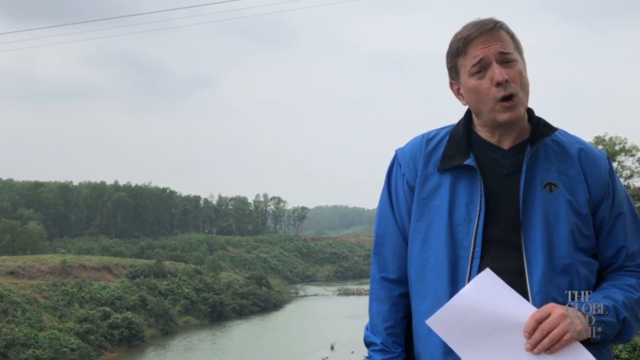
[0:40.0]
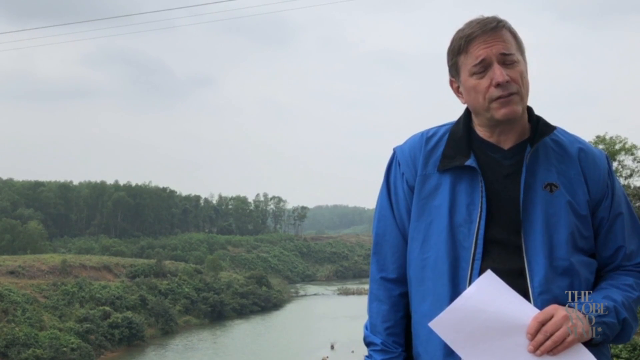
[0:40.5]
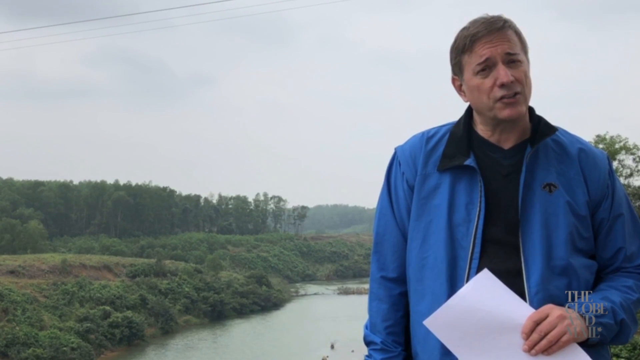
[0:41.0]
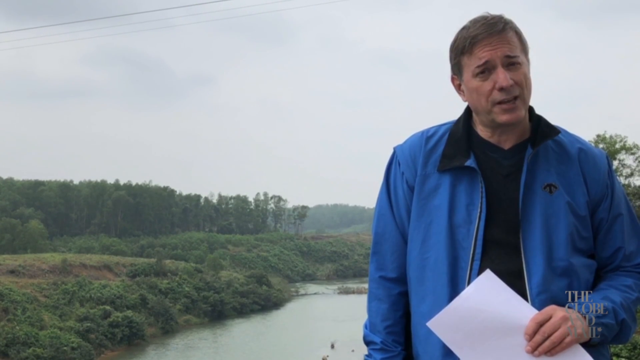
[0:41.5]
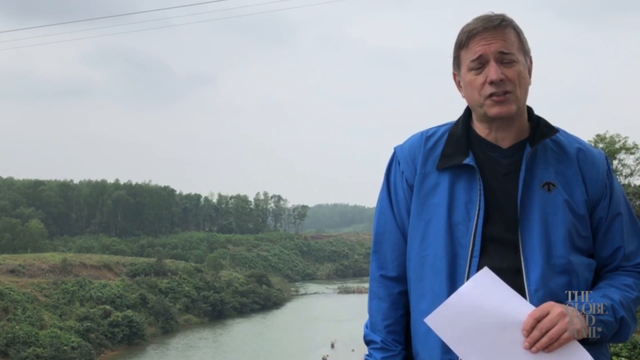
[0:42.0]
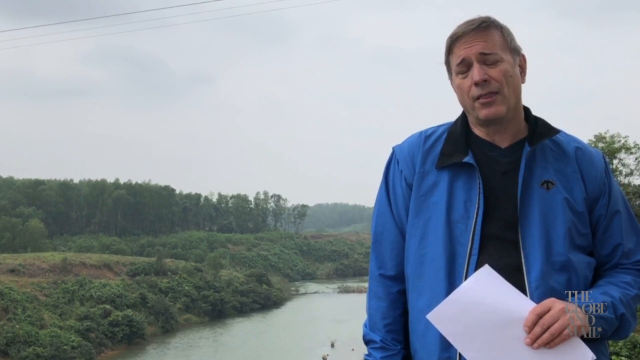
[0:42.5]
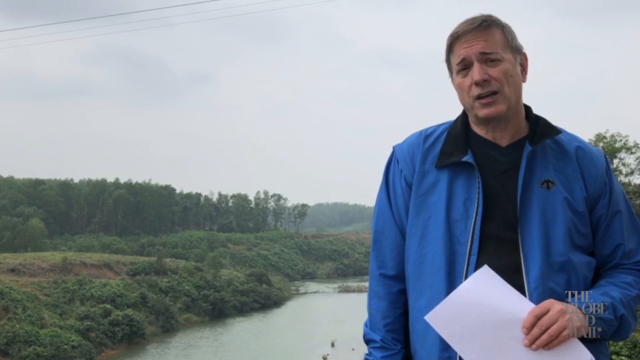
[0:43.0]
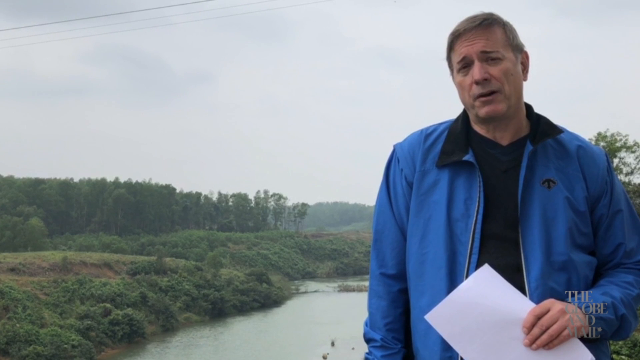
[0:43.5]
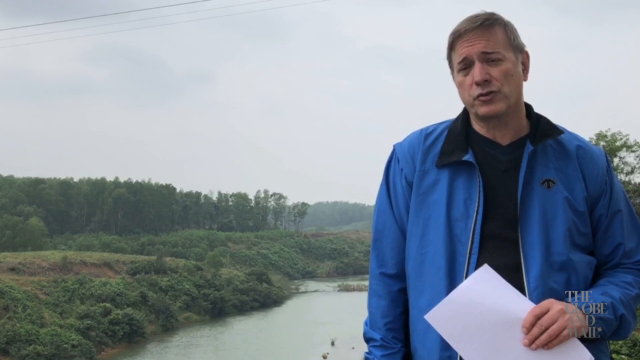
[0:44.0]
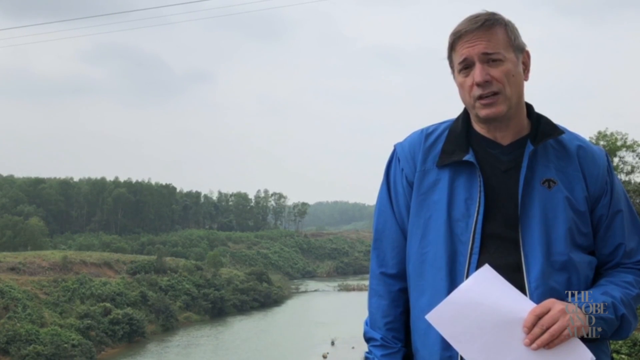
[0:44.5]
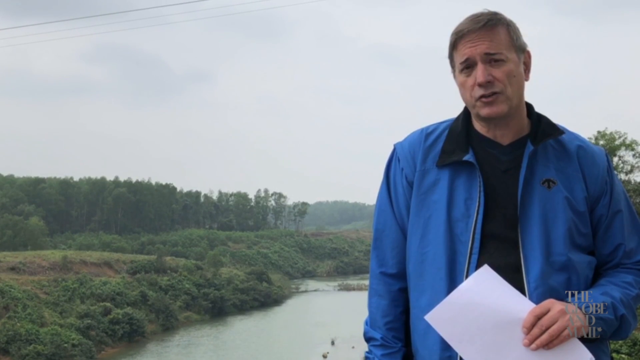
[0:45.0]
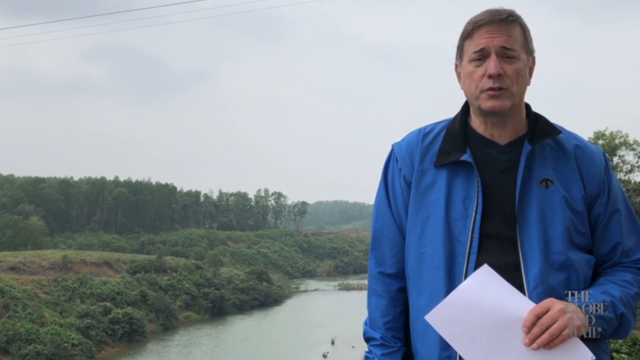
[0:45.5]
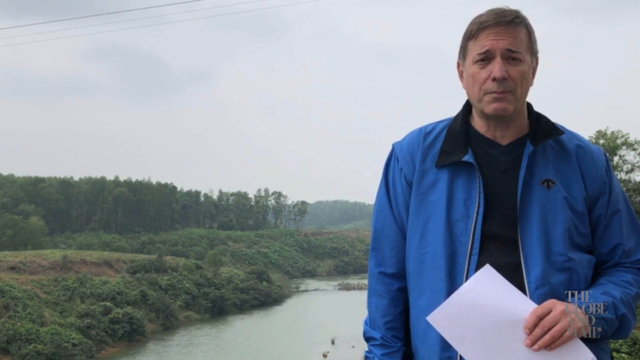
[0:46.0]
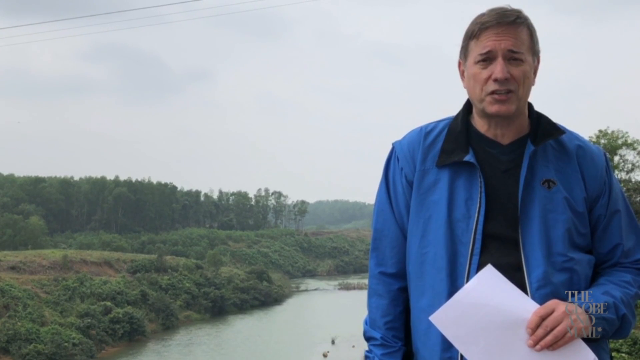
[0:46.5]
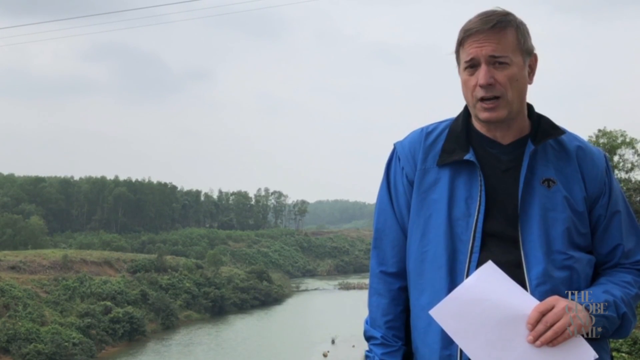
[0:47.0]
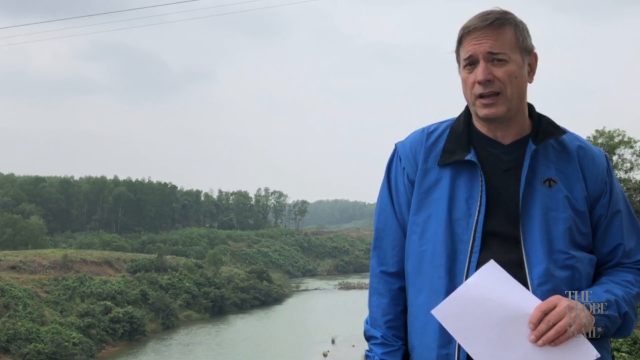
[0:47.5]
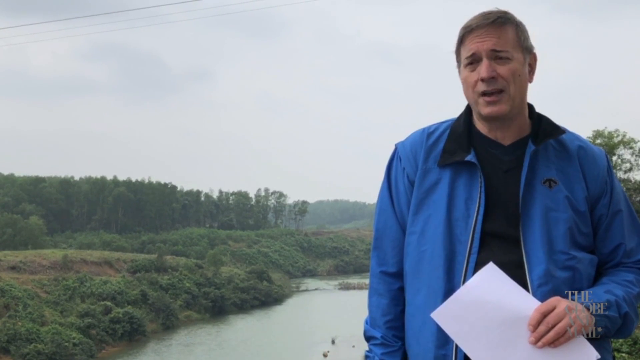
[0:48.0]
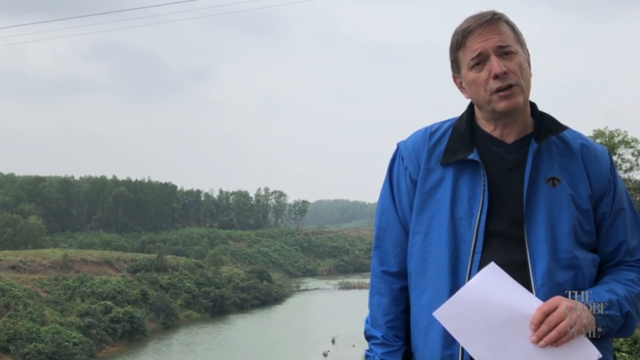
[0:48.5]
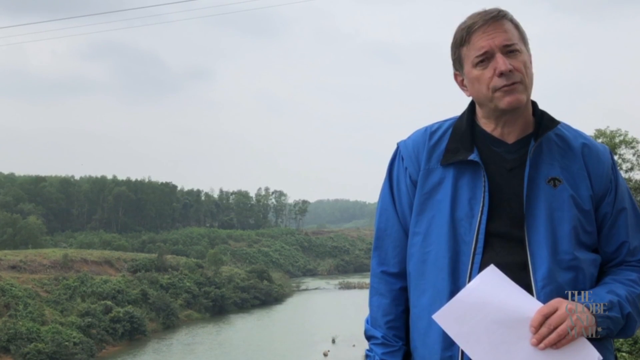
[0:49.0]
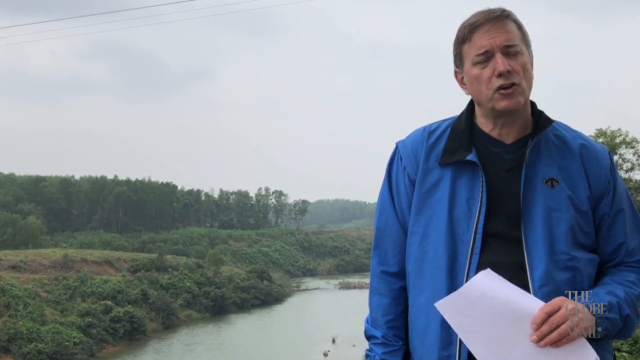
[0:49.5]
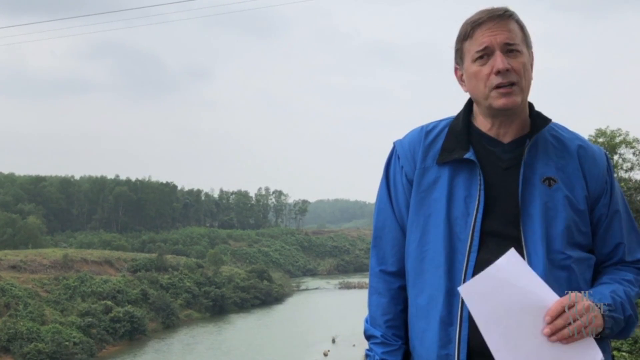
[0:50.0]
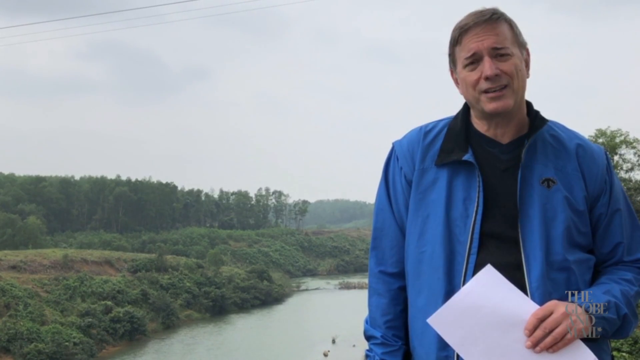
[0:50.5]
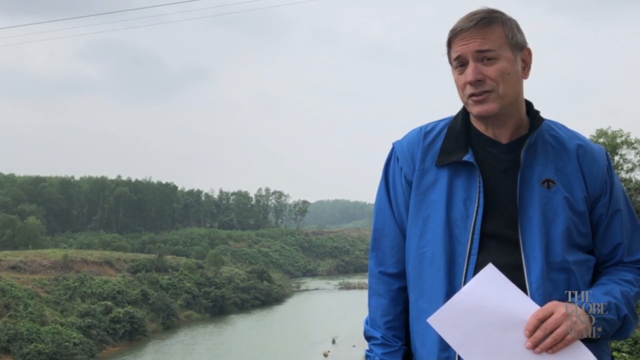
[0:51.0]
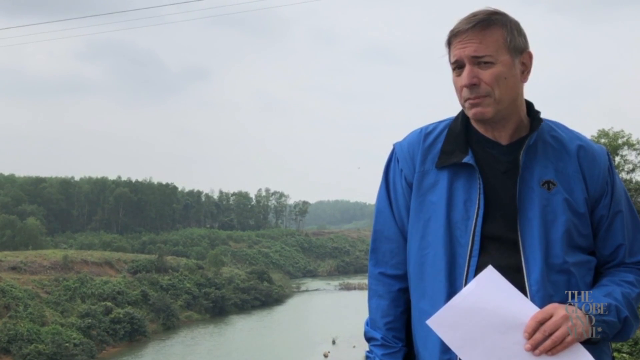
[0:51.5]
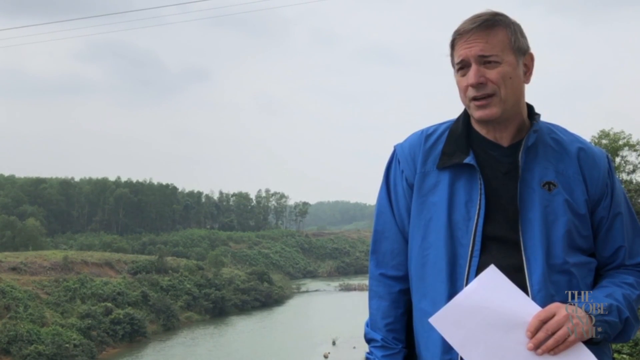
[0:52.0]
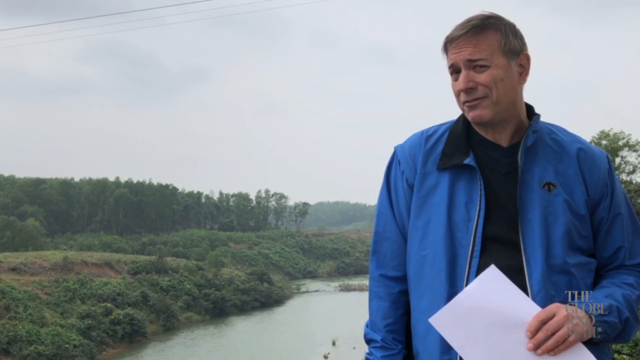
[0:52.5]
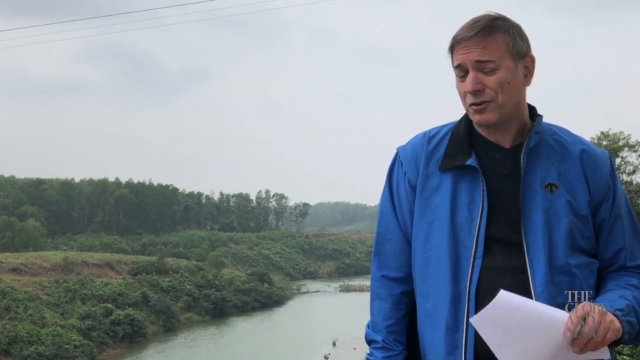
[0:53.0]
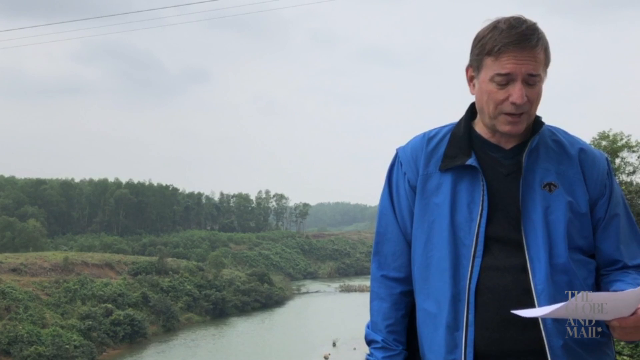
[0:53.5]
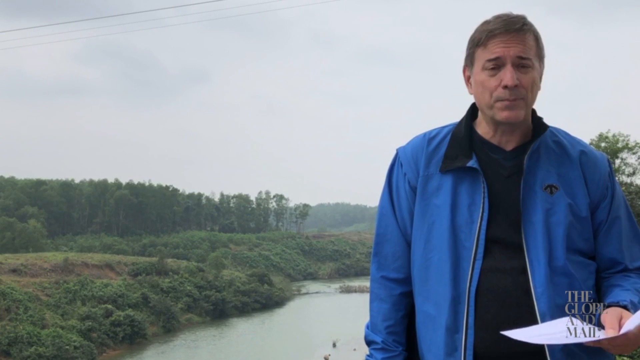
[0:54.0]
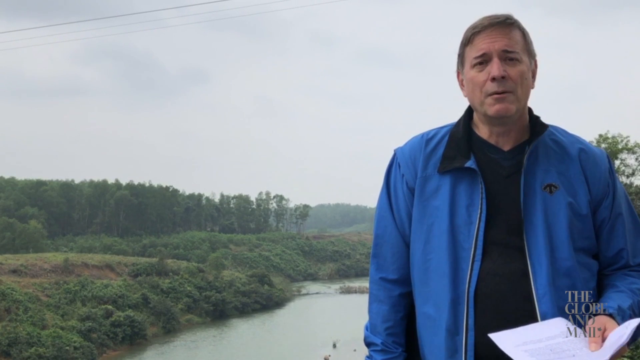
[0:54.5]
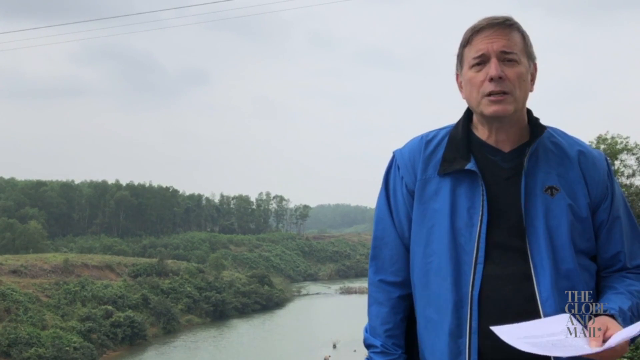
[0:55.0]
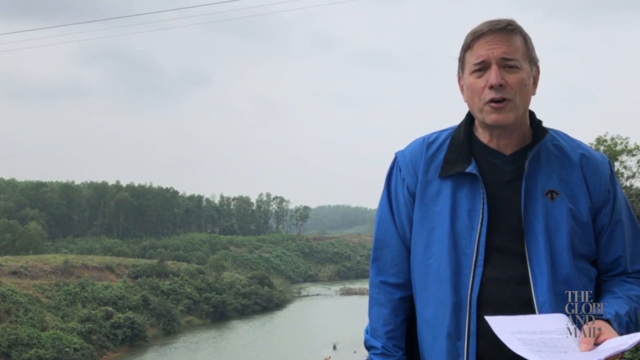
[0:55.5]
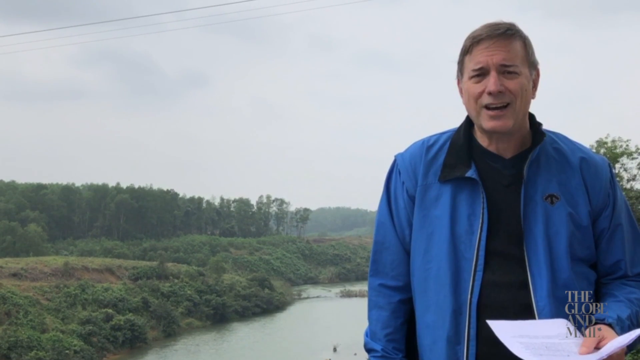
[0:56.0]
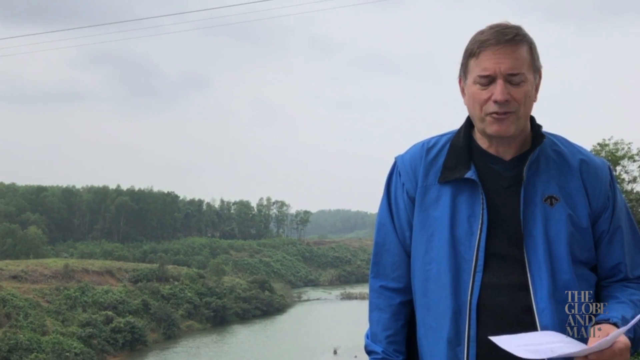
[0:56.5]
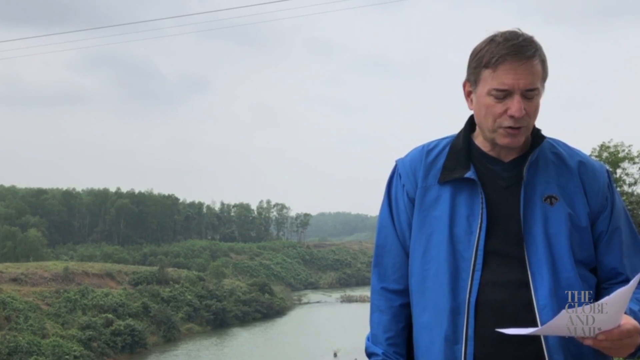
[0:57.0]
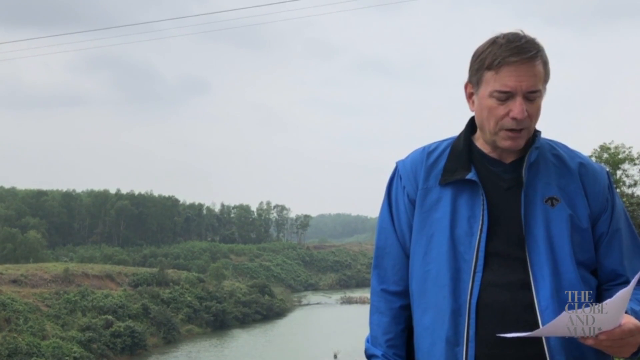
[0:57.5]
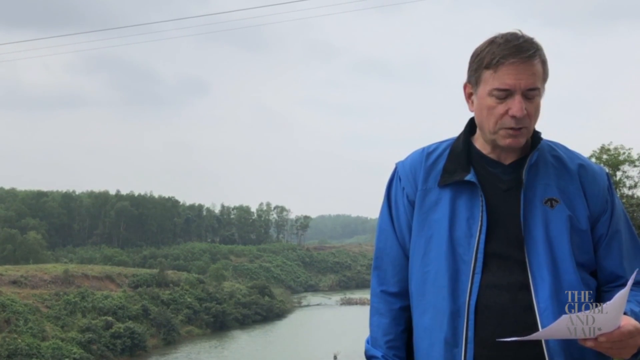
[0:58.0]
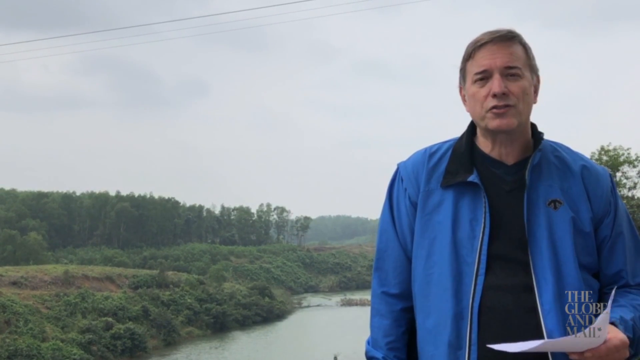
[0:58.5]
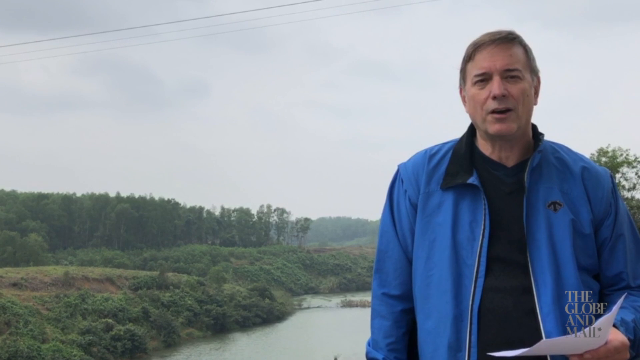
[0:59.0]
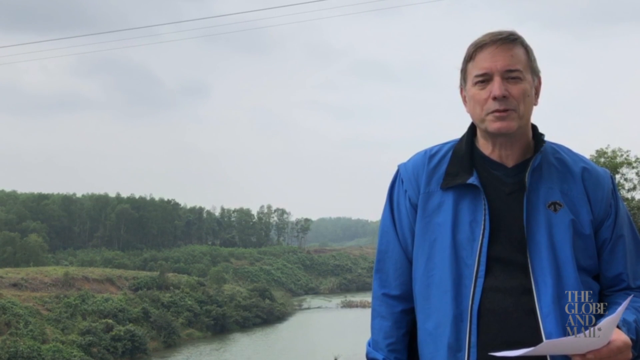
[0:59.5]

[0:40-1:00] The man in the blue jacket continues talking to camera, looking to be leaning slightly to his right. He holds white papers in his left hand that appear to be A4 in size, moving them around slightly as he talks. He holds them up briefly, then back towards the centre of his body, and then holds them out in front of him, glancing down at them as he talks. He appears to be reading from them, glancing between the camera and the papers. There is no movement in the background; it appears to be a slightly misty, overcast day, not very sunny or warm at all.